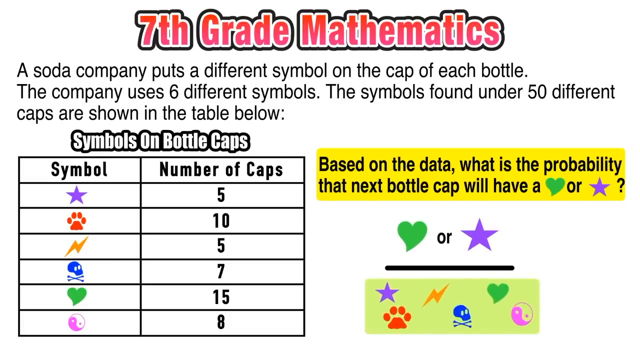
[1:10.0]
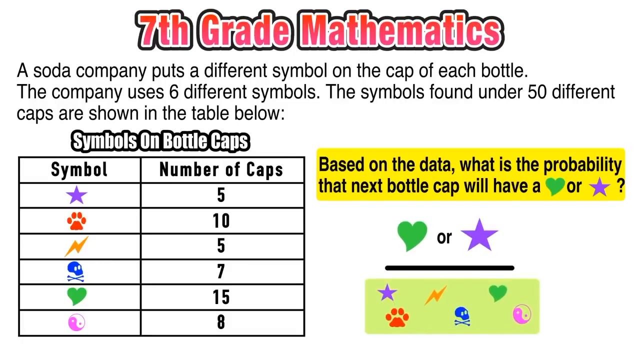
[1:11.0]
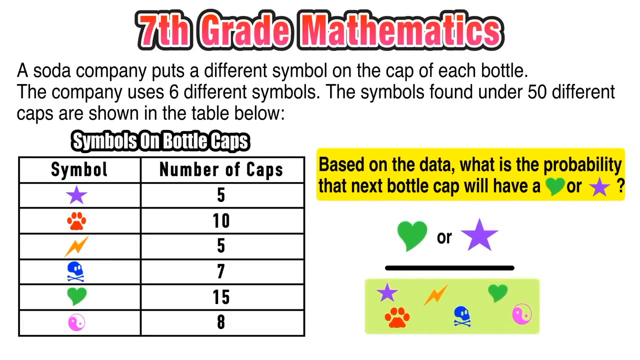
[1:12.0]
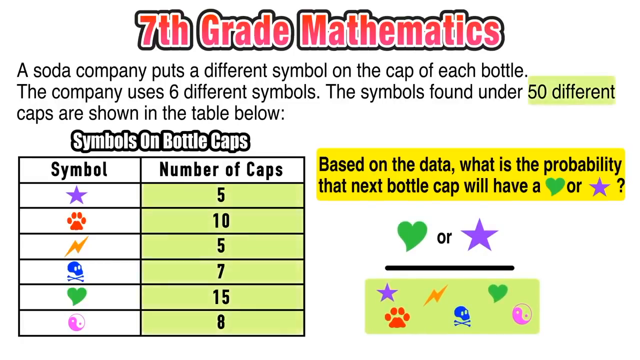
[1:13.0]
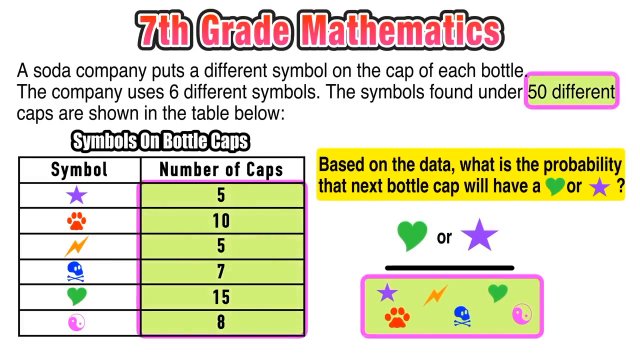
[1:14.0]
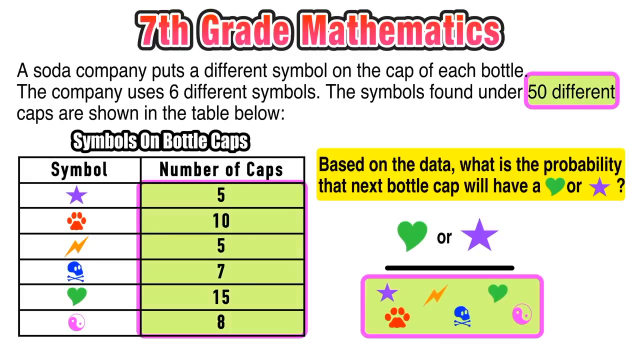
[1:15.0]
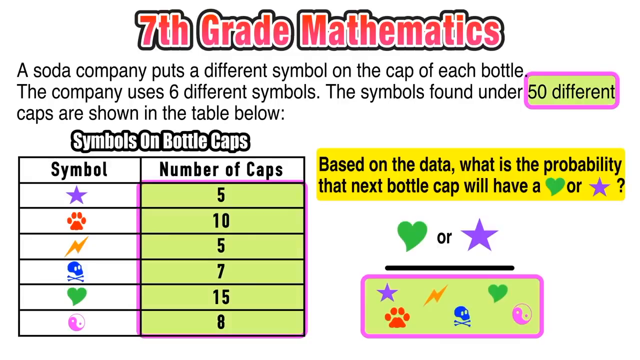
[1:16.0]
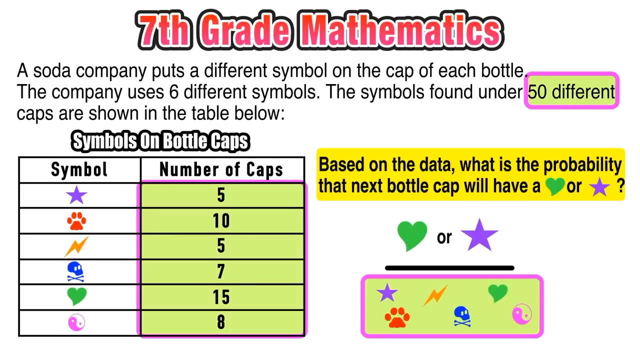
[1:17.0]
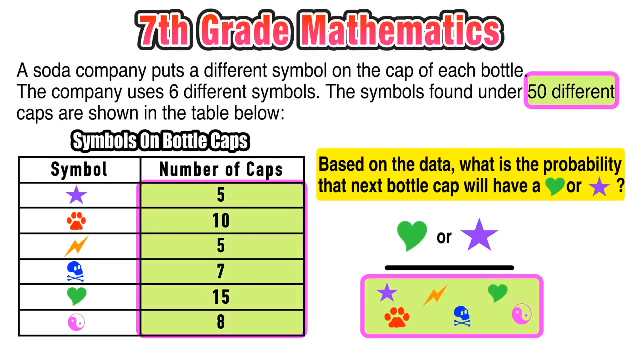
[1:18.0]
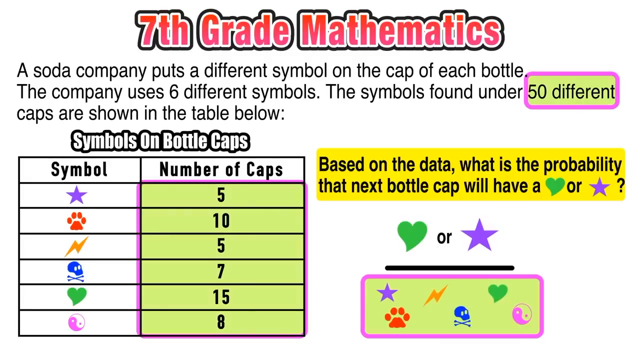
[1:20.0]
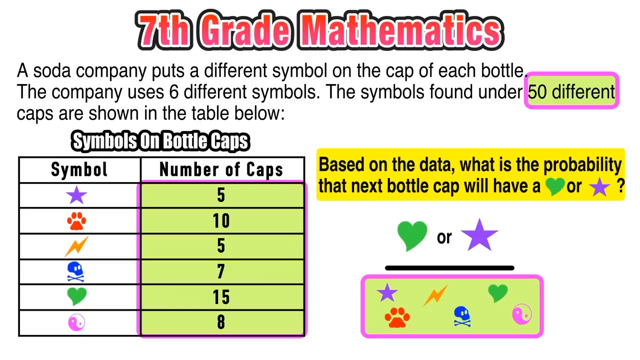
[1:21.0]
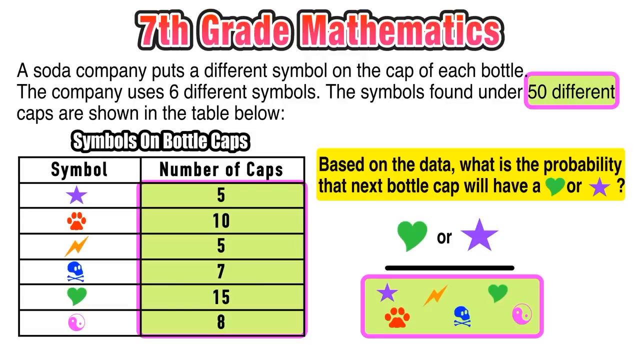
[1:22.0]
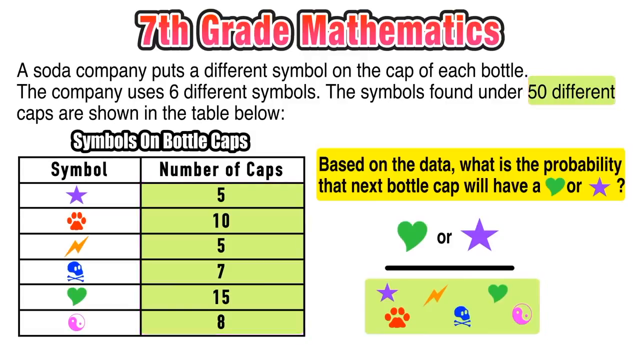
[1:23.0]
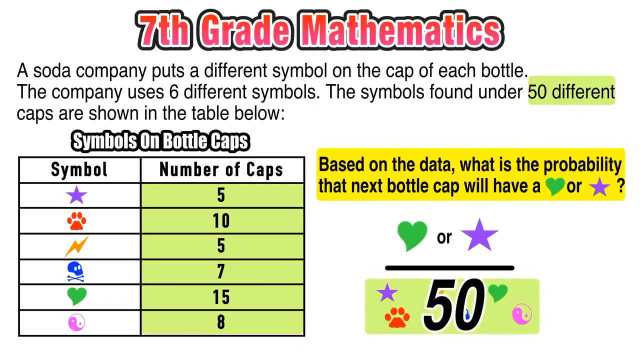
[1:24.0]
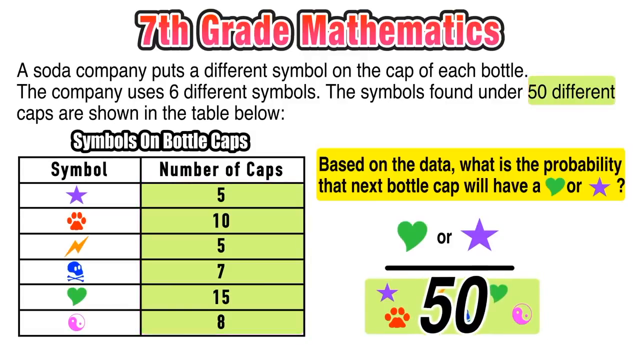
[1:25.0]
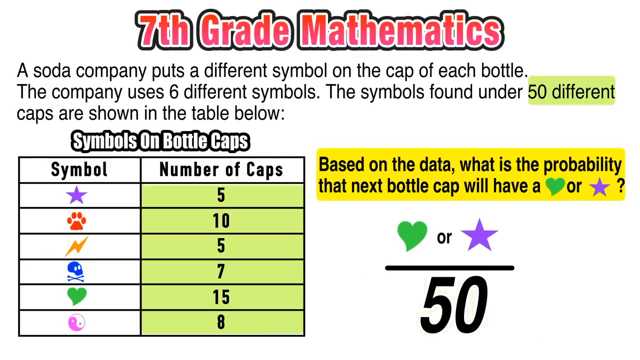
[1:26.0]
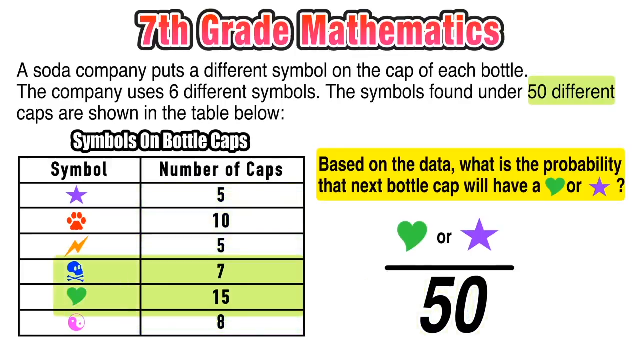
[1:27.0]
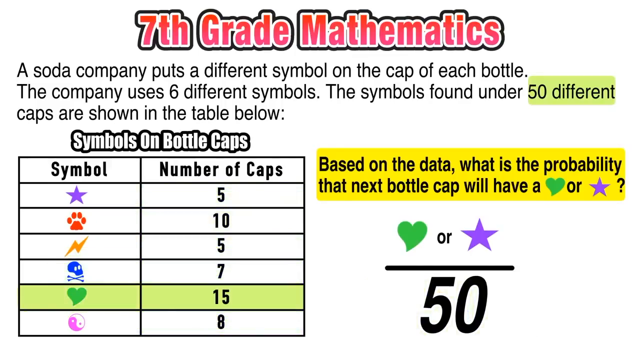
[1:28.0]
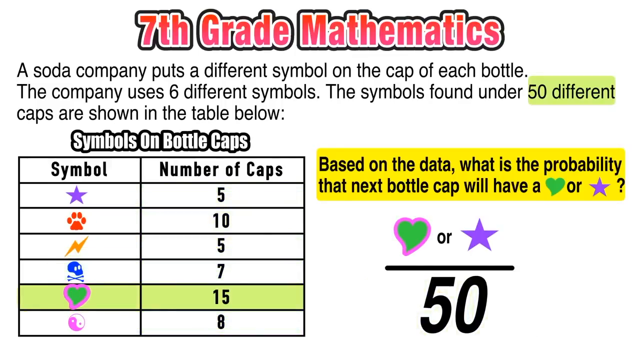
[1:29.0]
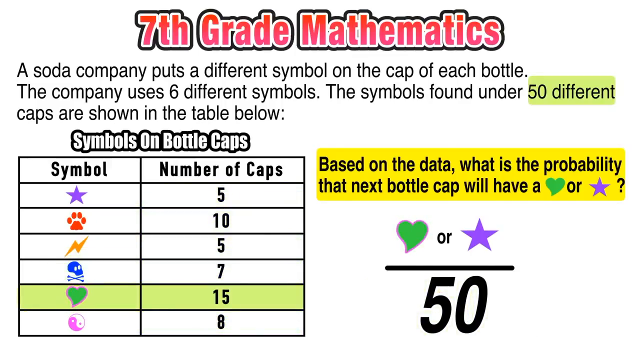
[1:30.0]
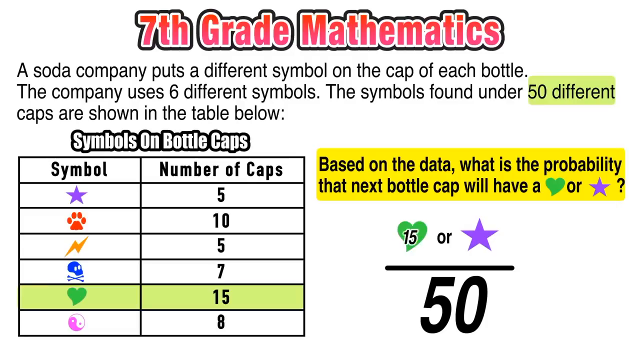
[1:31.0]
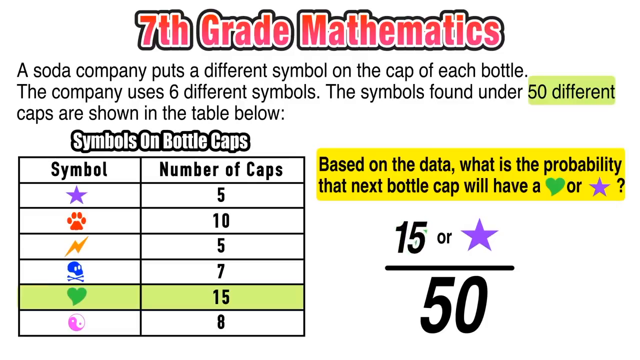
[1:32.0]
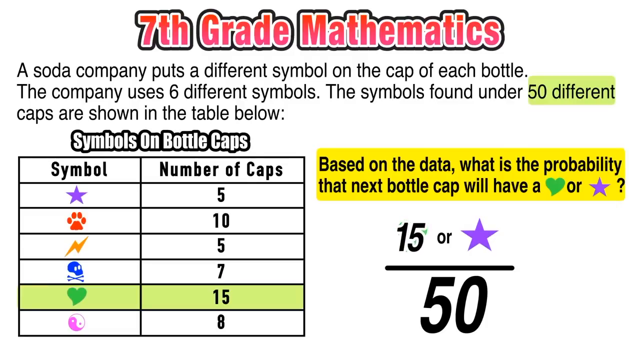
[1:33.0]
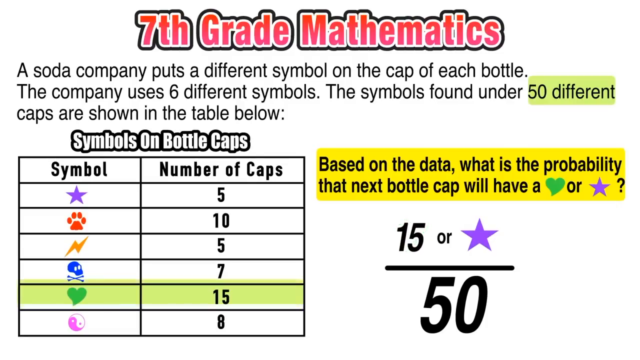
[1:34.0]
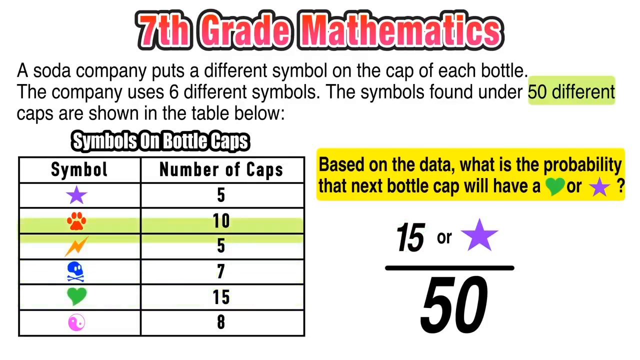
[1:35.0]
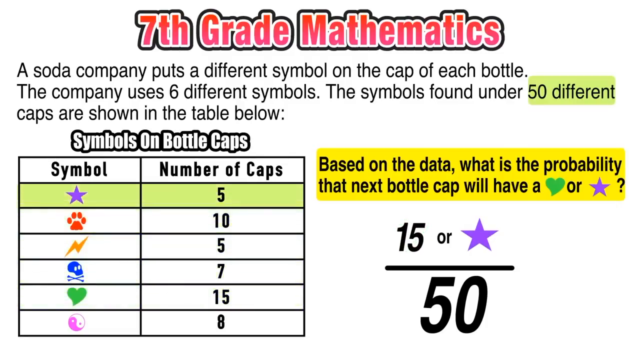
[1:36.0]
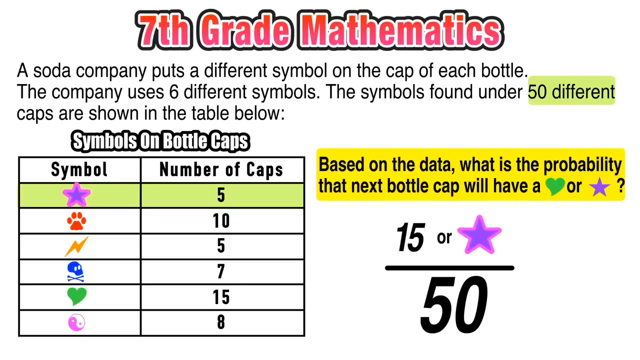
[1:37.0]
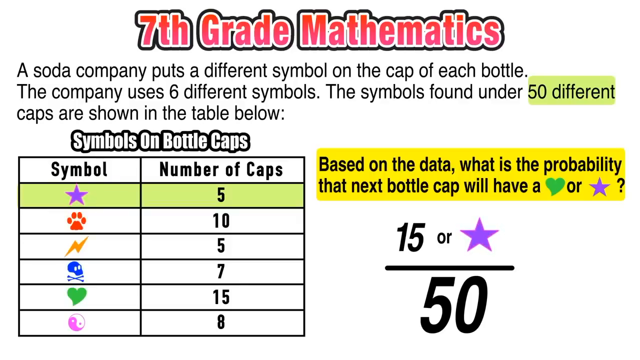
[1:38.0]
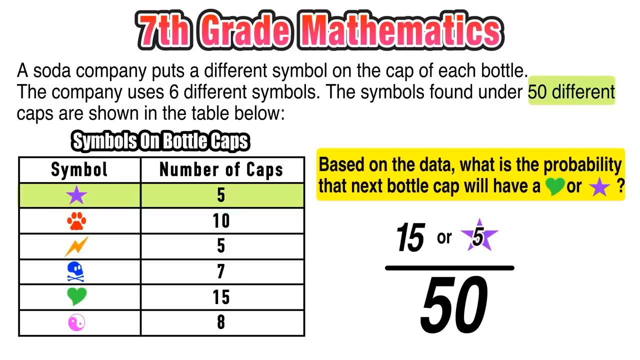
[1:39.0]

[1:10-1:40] At the bottom on the right side, different symbols are shaded in a rectangle. The number 50 appears on the screen, then a heart is highlighted in pink, the number 15 is shown, and a number 5 also comes up. As the numbers are shown, they are highlighted in different colors. The diagram of symbols on bottle caps is on the right side. The words "50 different" in a sentence at the top are also highlighted in green. The background is grayish, with different colors shown on the screen. "Seventh grade mathematics" is written at the top in bold red. The symbols are shown in different colors: blue, yellow, green, purple and red.